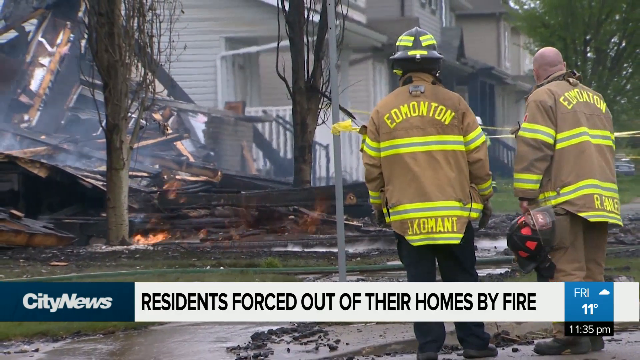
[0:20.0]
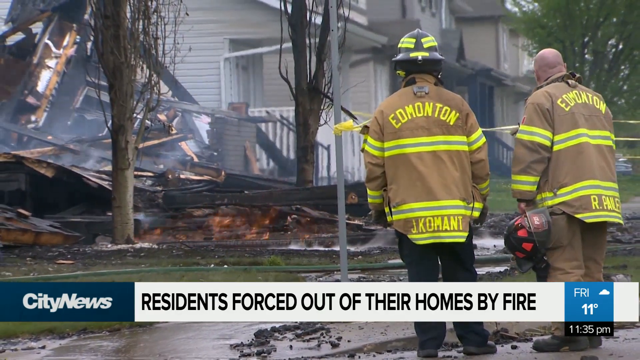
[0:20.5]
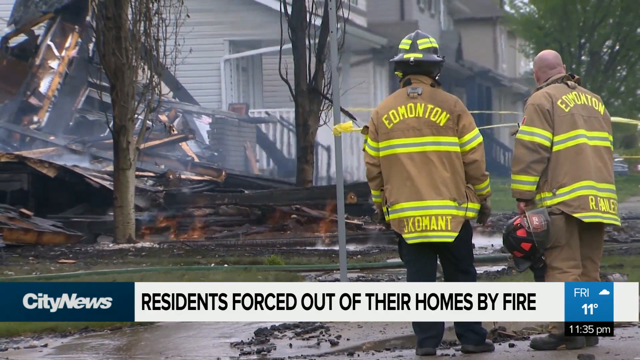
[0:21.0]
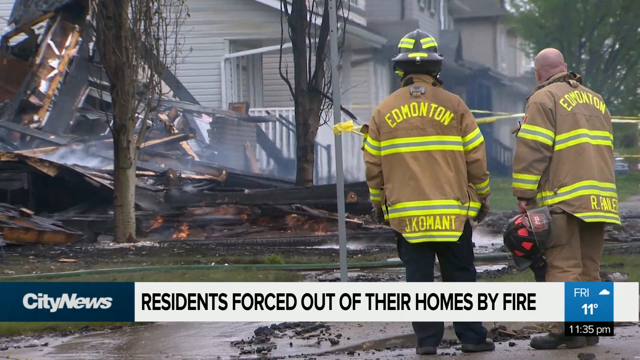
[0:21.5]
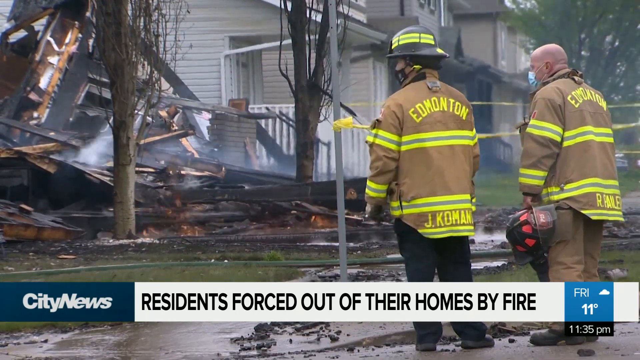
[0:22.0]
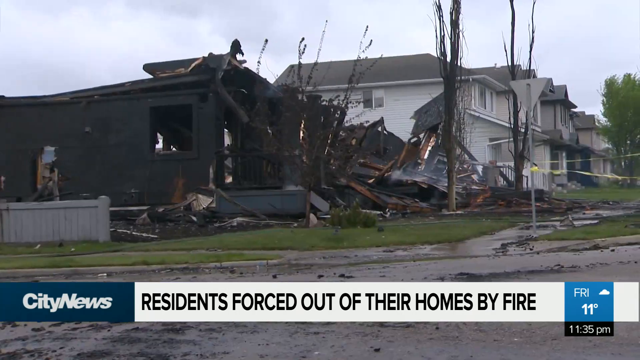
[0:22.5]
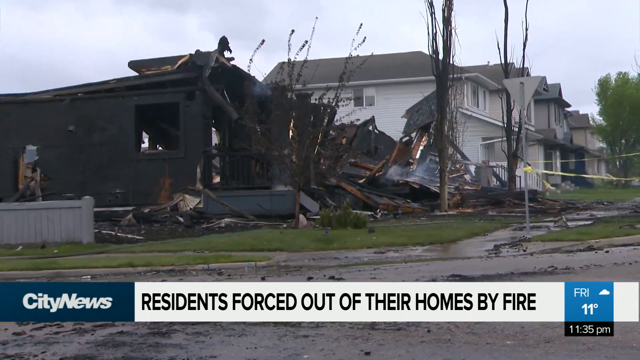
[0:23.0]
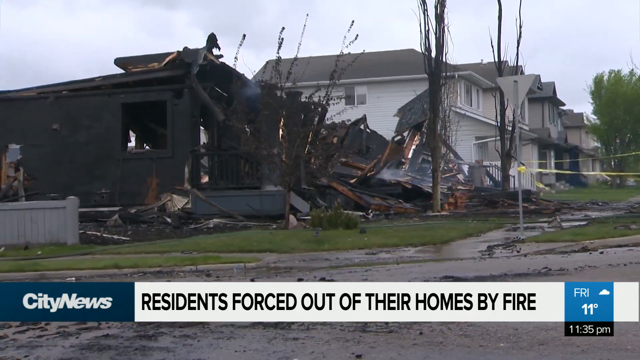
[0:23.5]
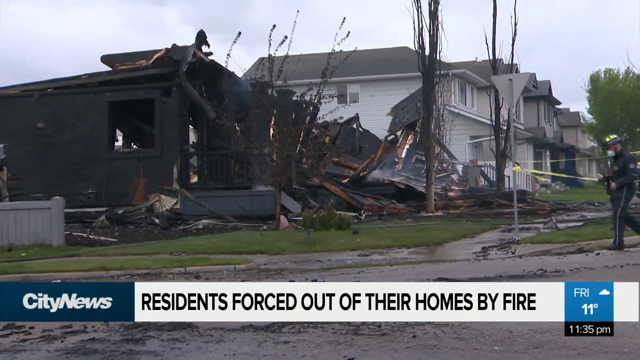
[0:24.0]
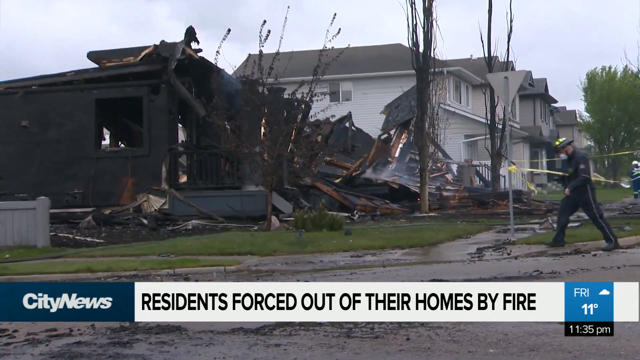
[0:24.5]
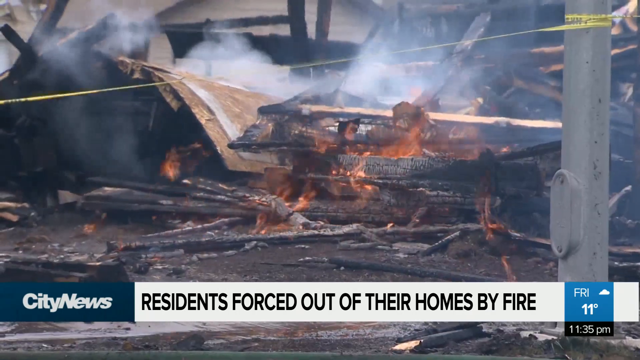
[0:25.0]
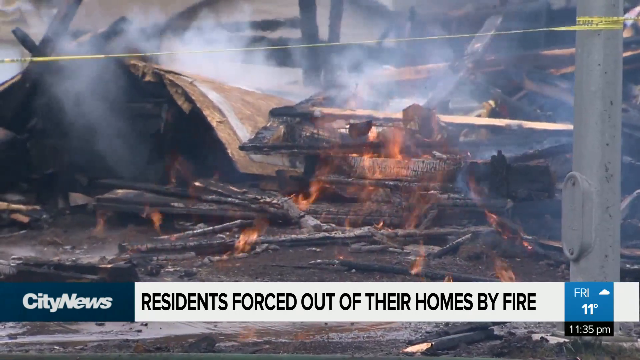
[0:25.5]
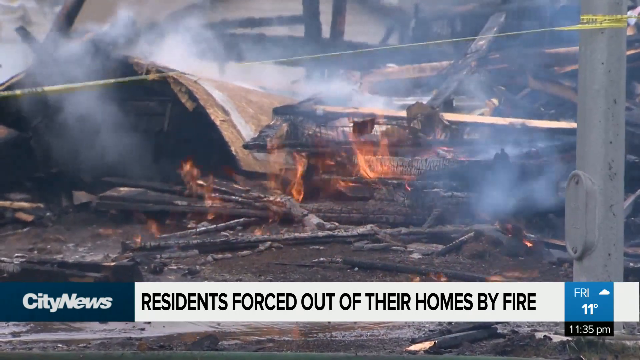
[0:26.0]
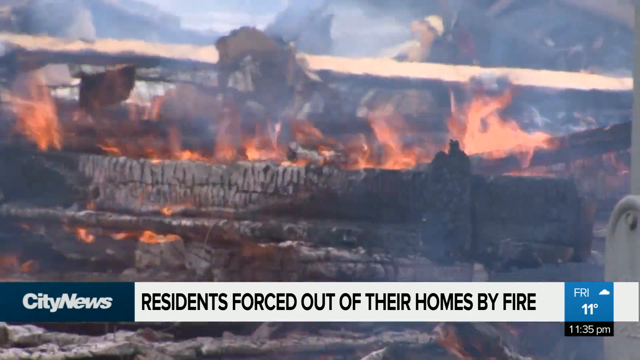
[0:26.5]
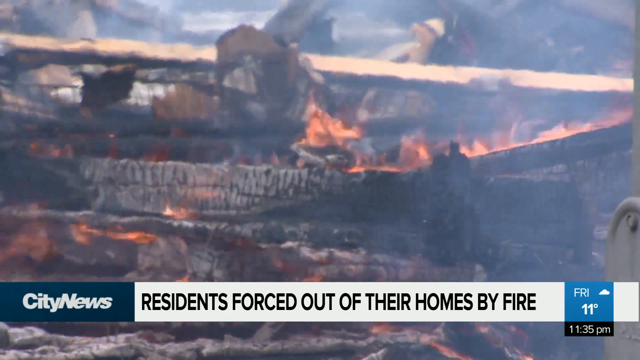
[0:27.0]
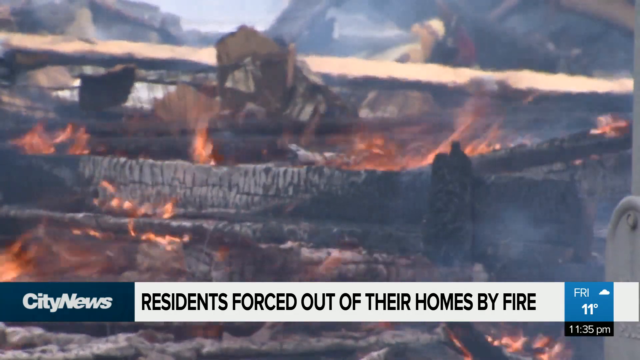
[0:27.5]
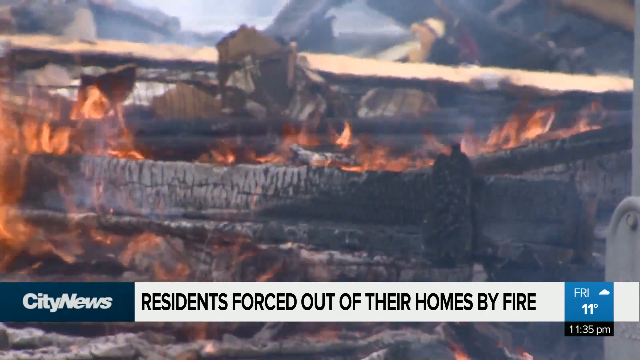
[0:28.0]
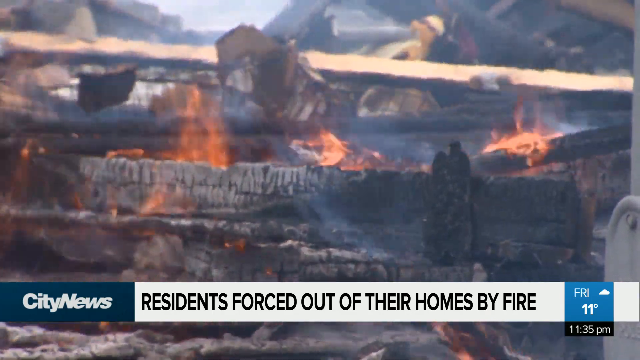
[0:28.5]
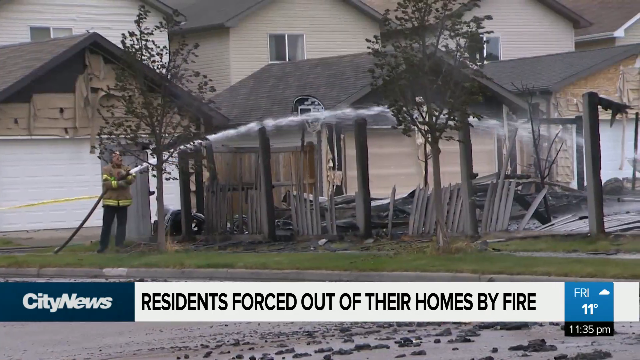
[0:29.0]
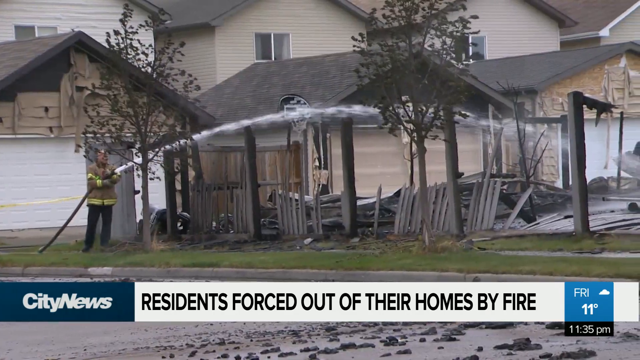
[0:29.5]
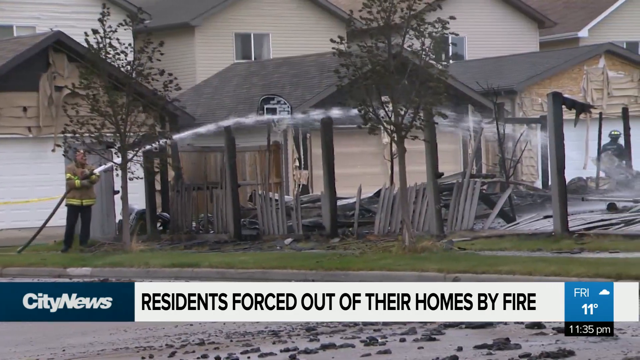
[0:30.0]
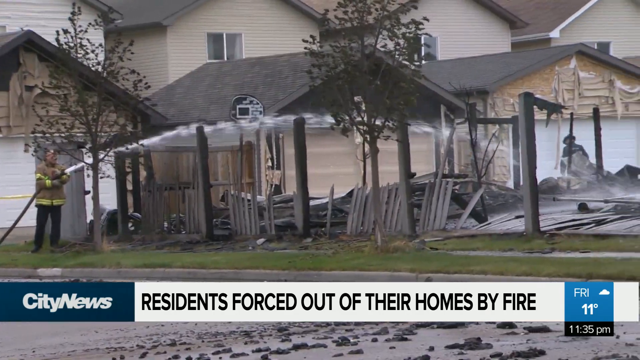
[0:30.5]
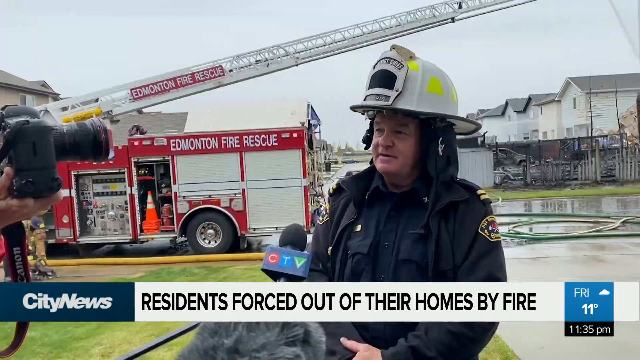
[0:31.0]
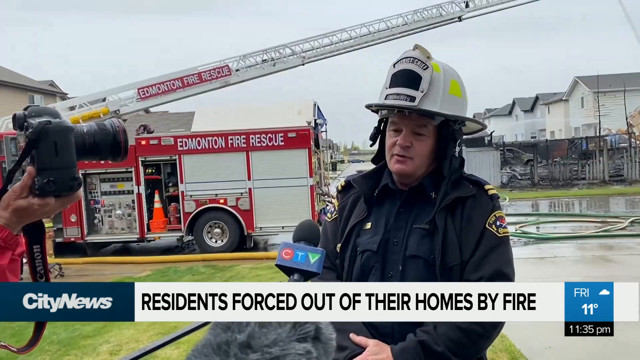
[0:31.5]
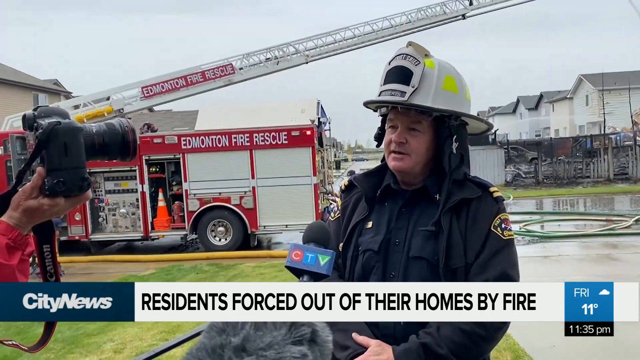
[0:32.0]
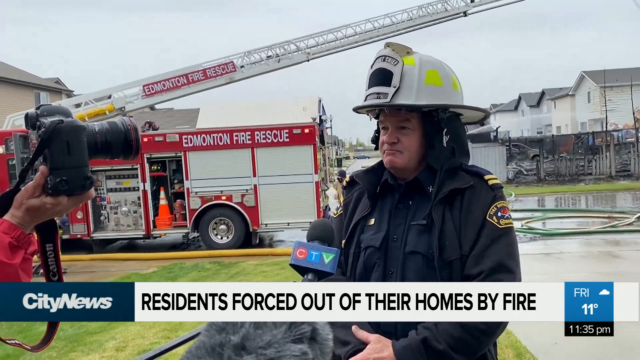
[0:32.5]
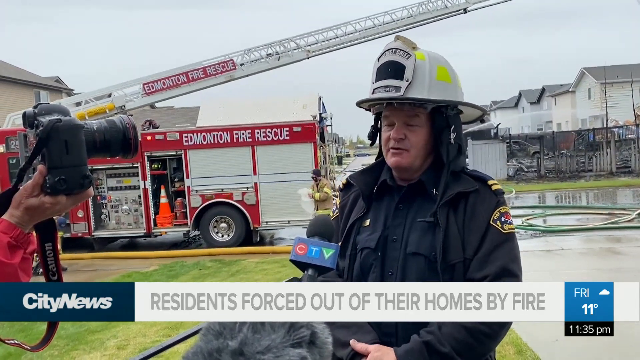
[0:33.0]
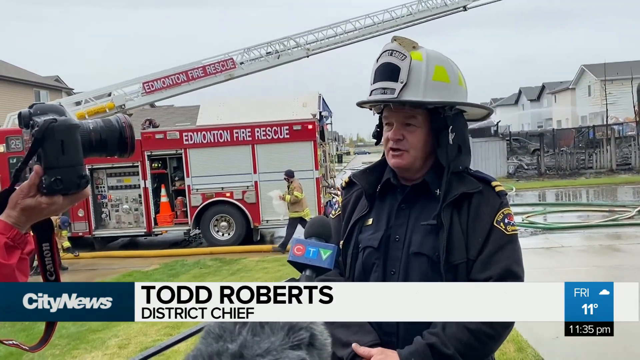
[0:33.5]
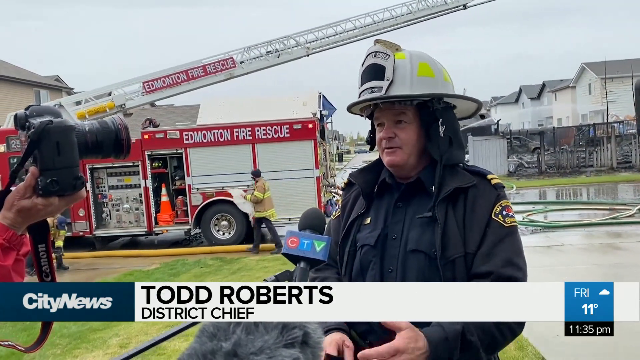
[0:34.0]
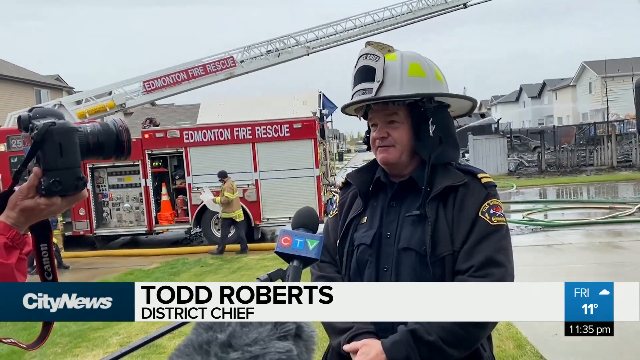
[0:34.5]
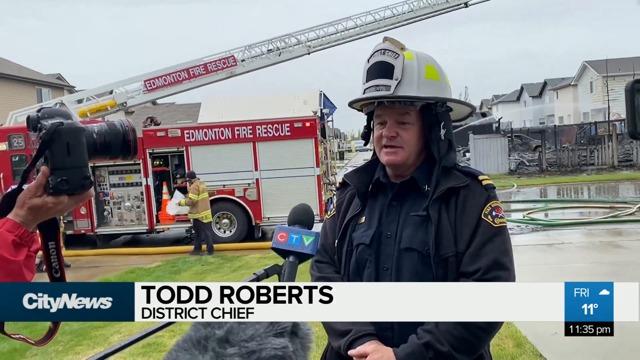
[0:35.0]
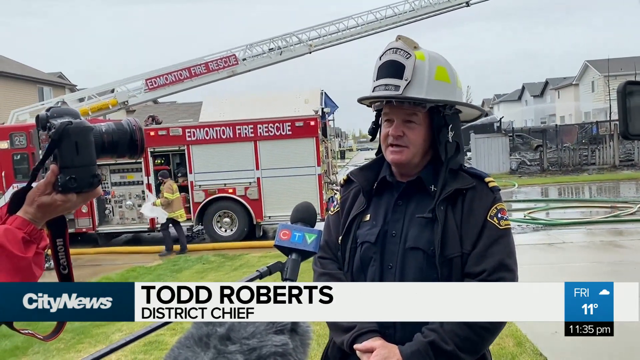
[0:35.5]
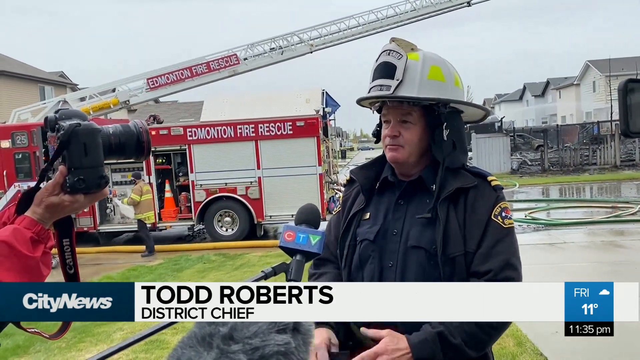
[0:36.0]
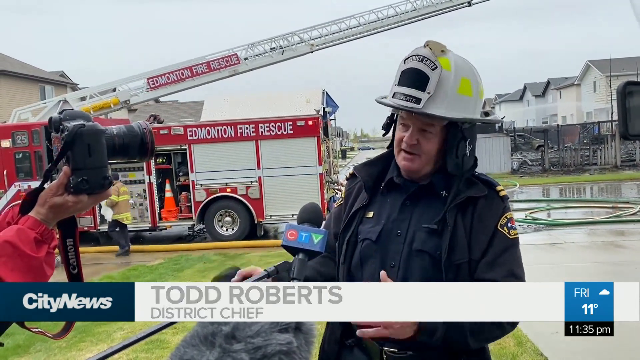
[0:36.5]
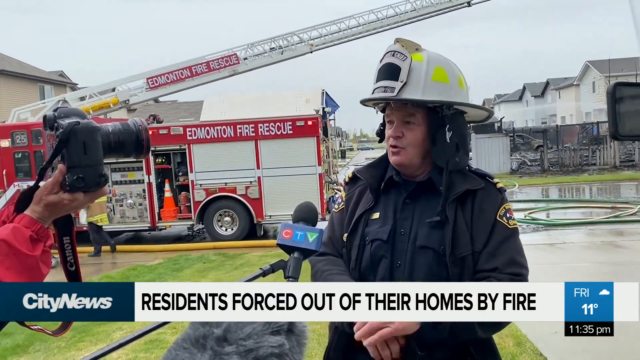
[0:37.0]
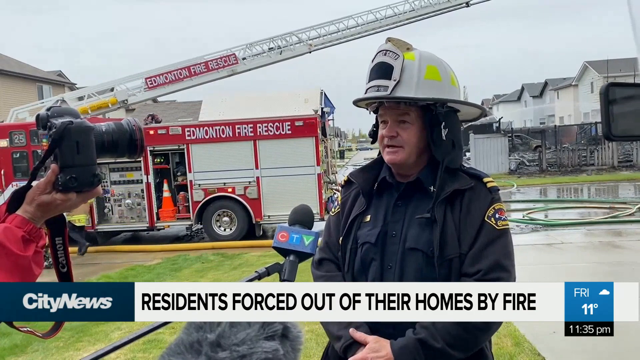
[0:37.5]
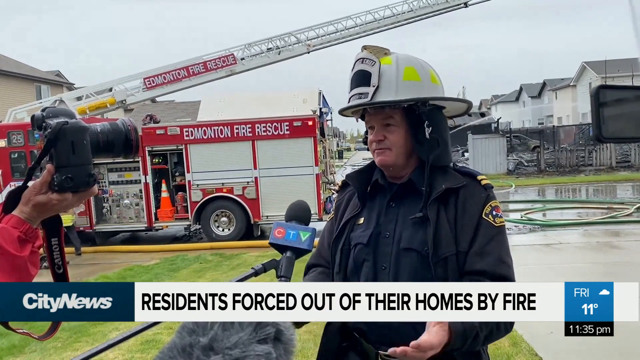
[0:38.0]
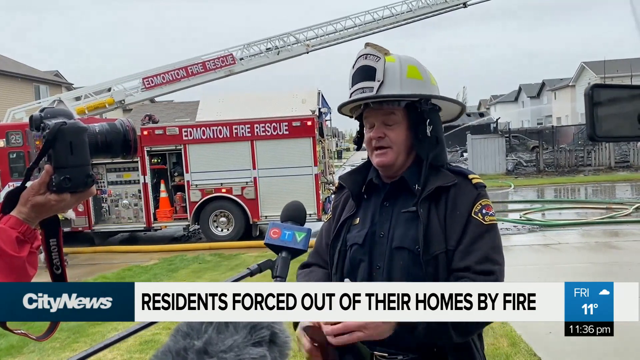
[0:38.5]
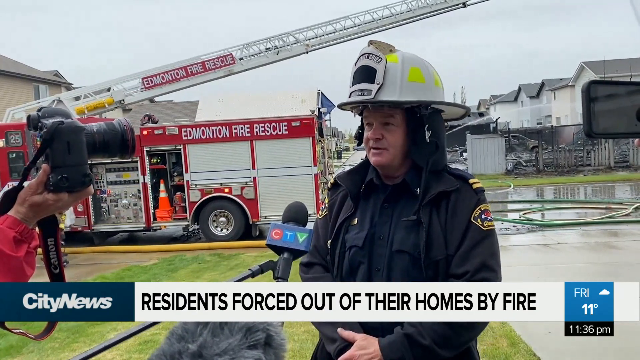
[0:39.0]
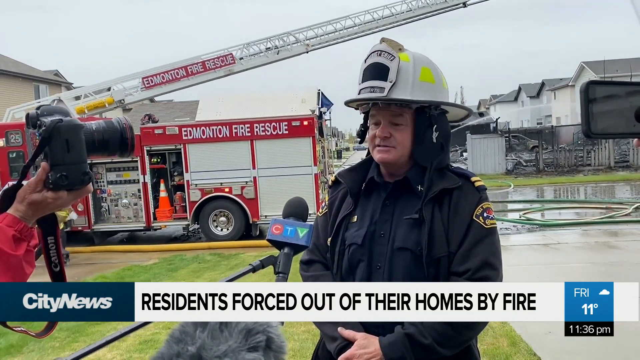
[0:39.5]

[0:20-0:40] Two firefighters wear beige jackets with reflective yellow tape across the back, yellow with a silver stripe in the middle, and at the top the jacket says "Edmonton". One of the men wears a black hard hat, also with the yellow reflective tape. They stare at the burnt-down house, which is still on fire in a few spots, with smoldering embers visible. The house is completely burned down and unsalvageable. The fire is still going as they spray more water and chemicals on it to put out the rest, and white smoke still comes out of the wreckage. Next, one of the fire personnel is interviewed; he wears a black jacket and a white helmet. Behind him is a large red fire truck with white on the side that says "Edmonton Fire and Rescue". Orange safety cones are on the side of the fire truck, and the truck has a long white extension ladder. Green hoses are laying in the background.